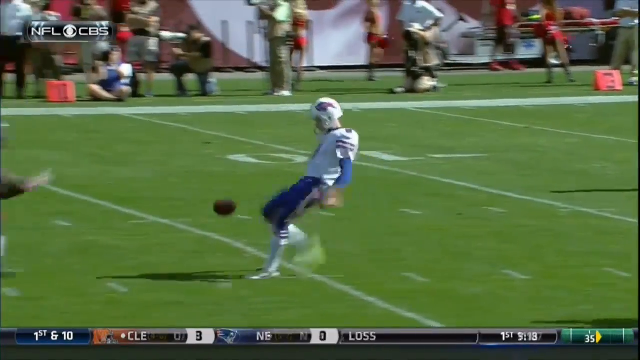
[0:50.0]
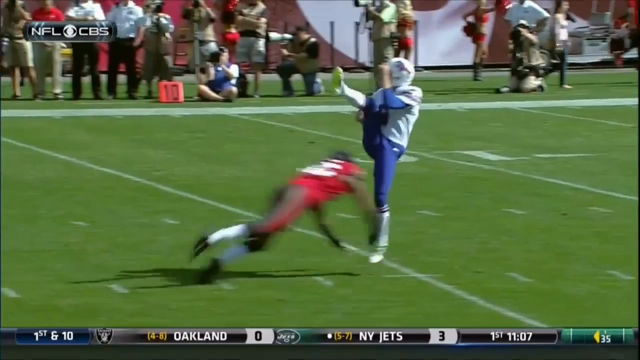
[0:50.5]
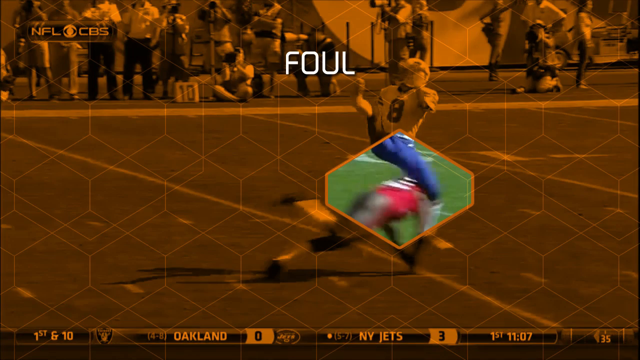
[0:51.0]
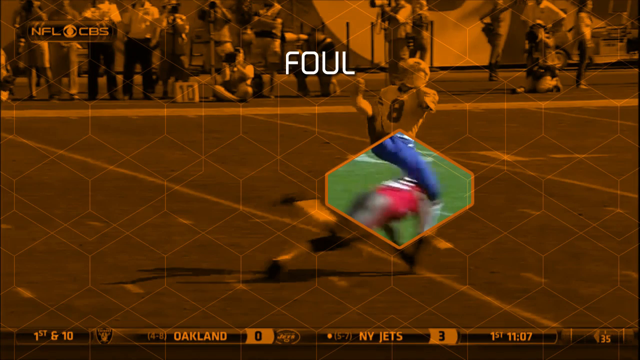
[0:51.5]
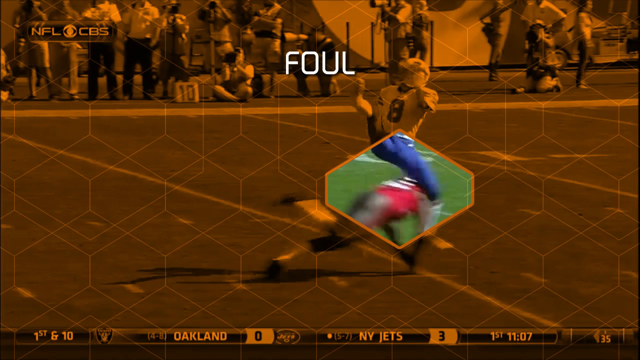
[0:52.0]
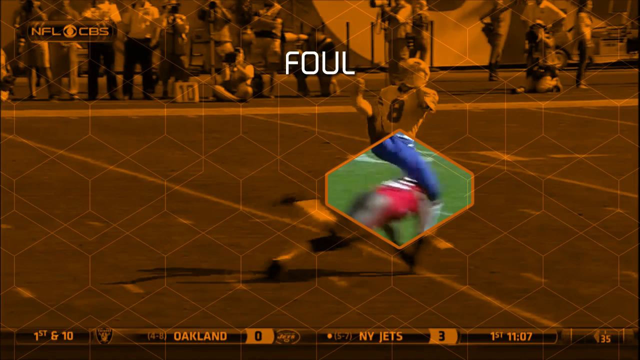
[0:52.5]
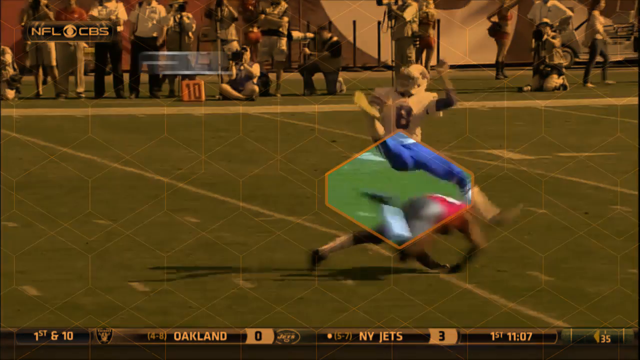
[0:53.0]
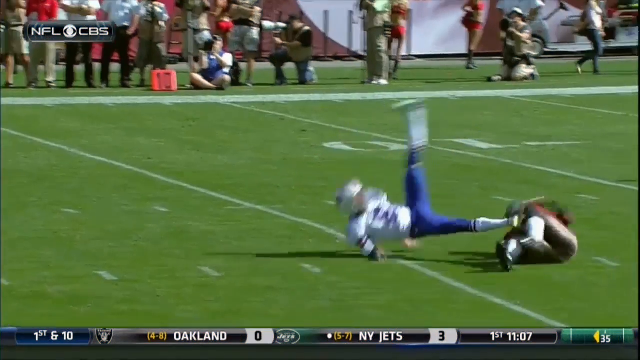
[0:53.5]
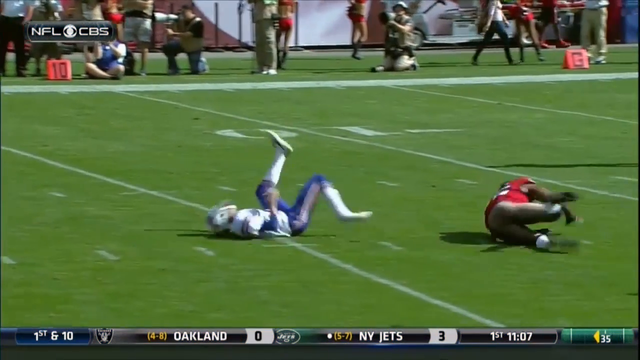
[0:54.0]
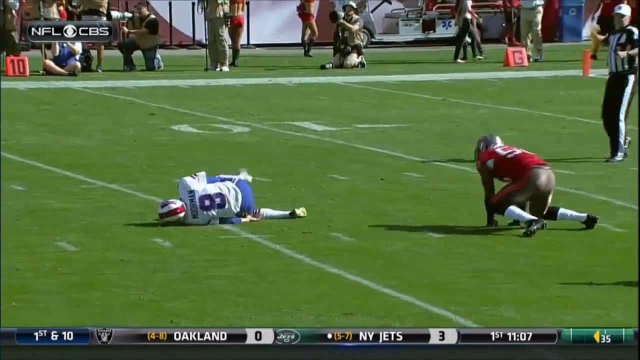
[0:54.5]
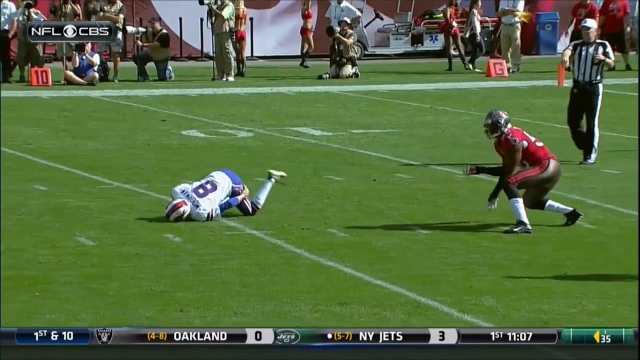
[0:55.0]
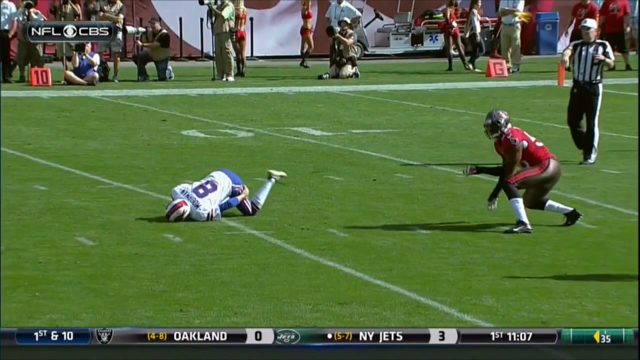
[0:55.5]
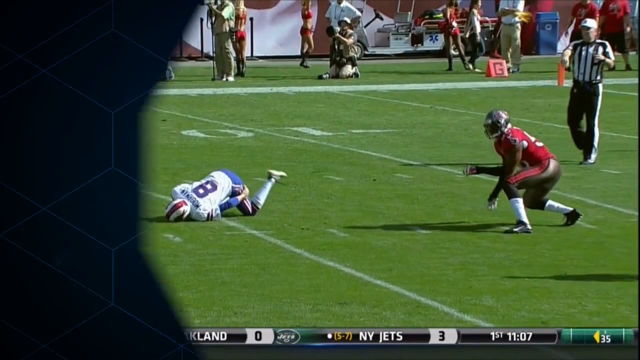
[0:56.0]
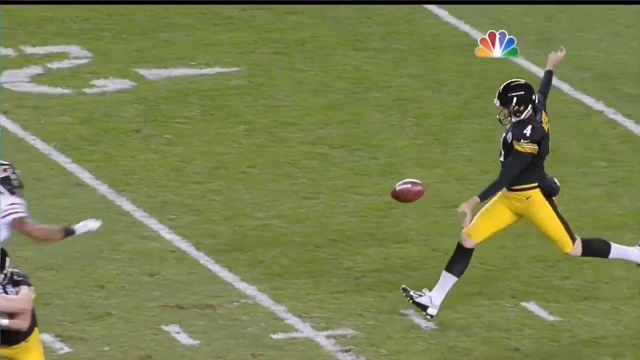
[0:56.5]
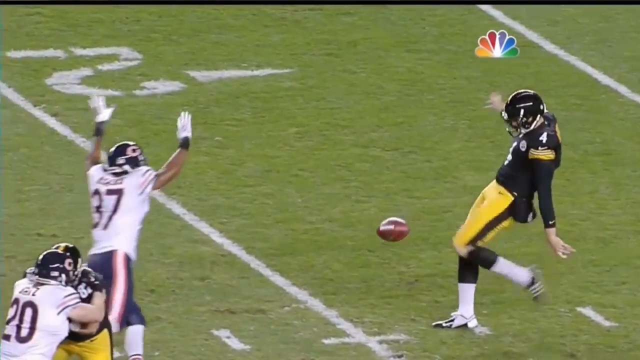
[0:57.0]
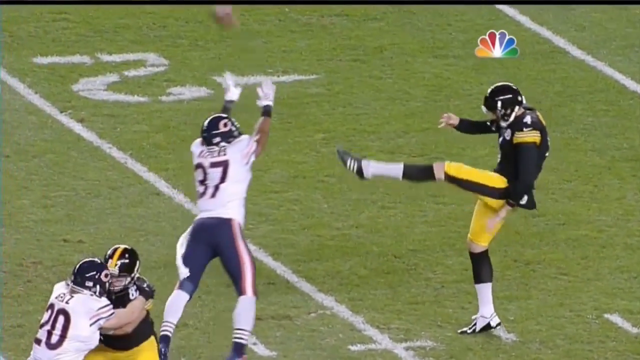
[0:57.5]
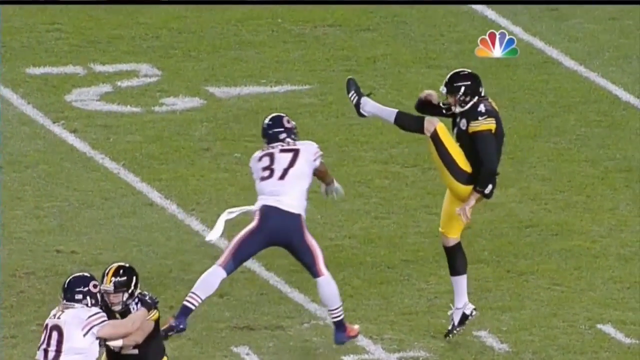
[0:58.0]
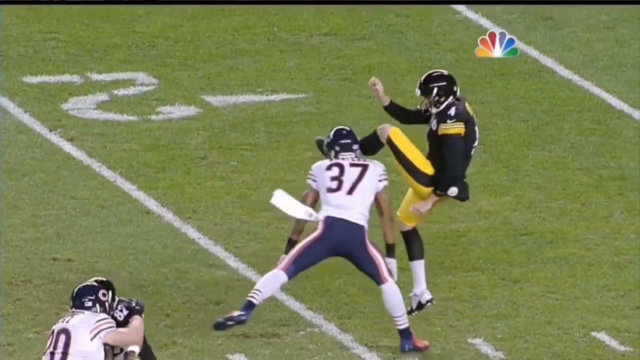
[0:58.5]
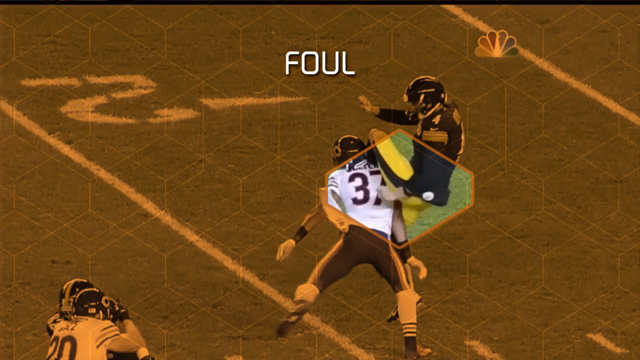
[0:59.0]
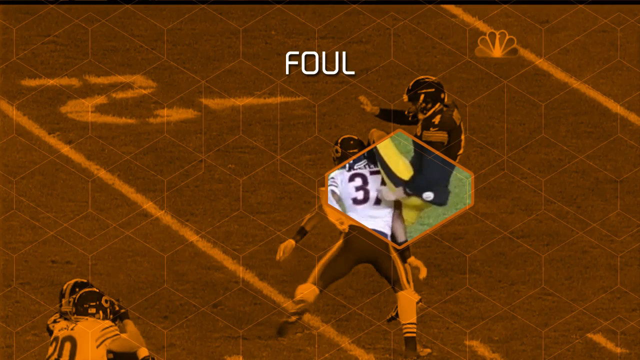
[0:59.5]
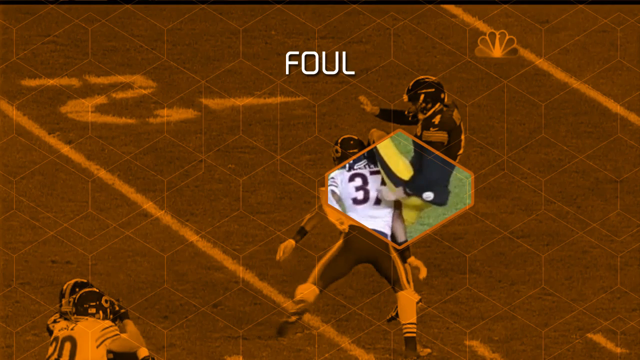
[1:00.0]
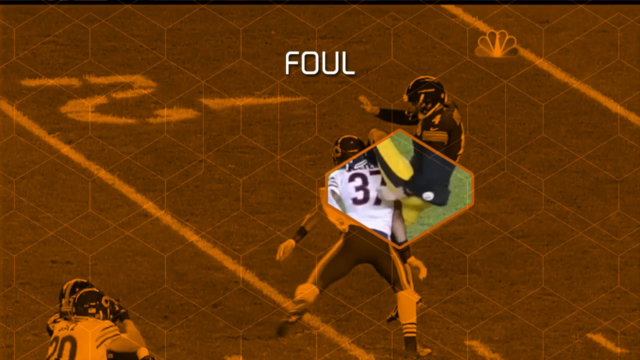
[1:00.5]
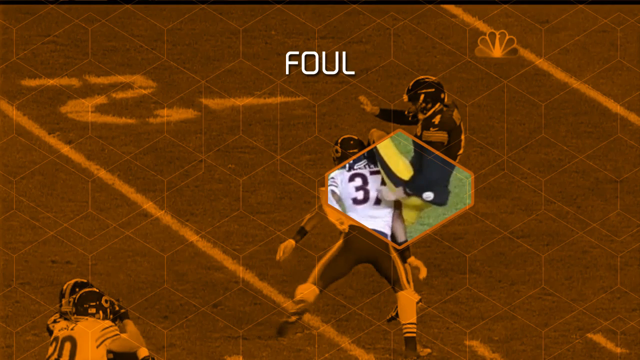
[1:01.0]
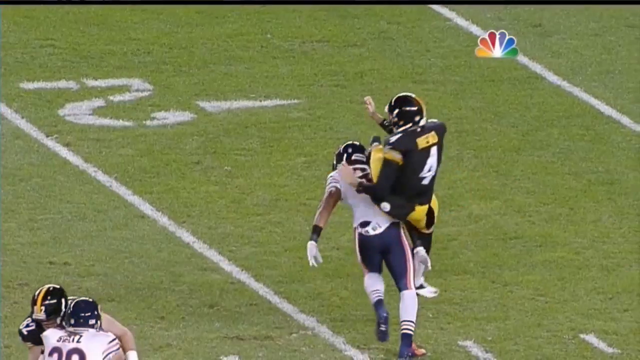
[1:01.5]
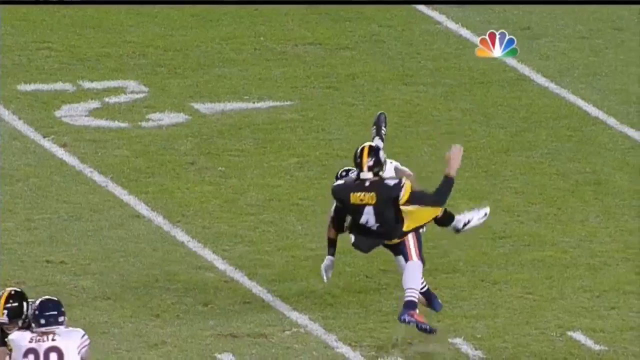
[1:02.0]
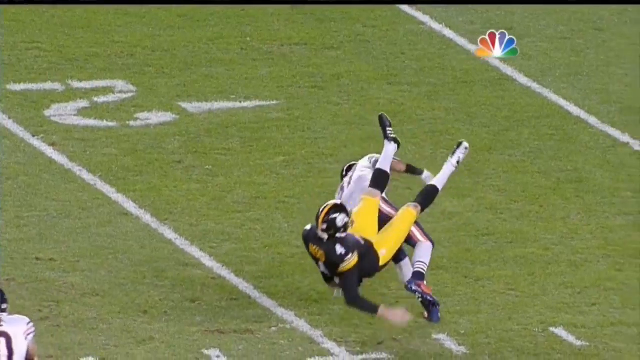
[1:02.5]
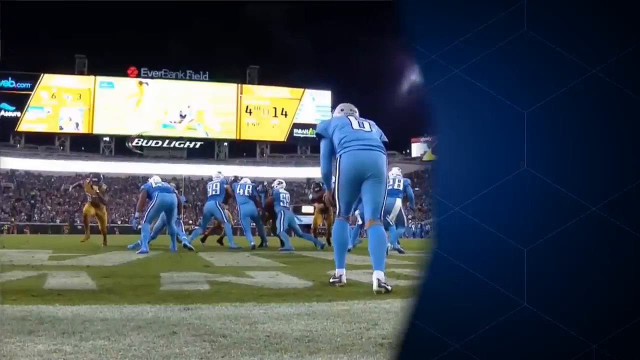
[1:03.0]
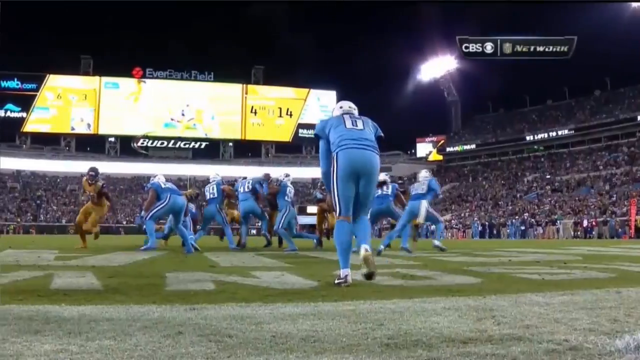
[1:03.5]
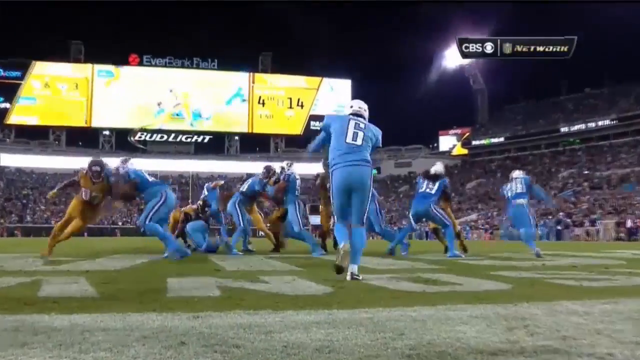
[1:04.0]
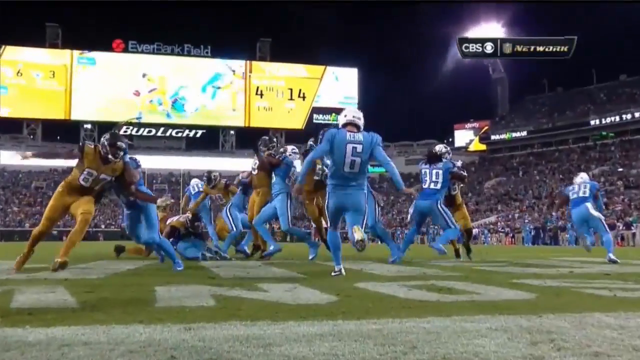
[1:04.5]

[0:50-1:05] The Bills player punts the ball, and as he gets it off, a Buccaneers defender comes and contacts his standing leg right after the punt, hitting him low around the knee. The orange background with a little diamond around the contact point pops up and says "foul." The players kind of both collide and go falling. The next play shows a Steelers punter playing against the Bears, punting from around his own 20-yard line while a Bears player comes through to try to block it. The Steelers punter gets the ball off, punting it up into the air, and as he is kind of coming down from his split position his knee bends and the Bears defender hits him right in the side of the leg. The orange background with the little diamond comes up, saying "foul" at the contact point. The punter kind of spins off his back and falls down. Then comes a play that looks like the Titans against the Jags, shown from a back view: the punter receives the ball in his end zone and is just about to punt it.